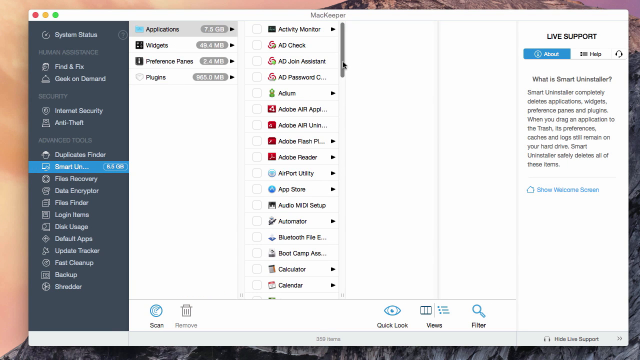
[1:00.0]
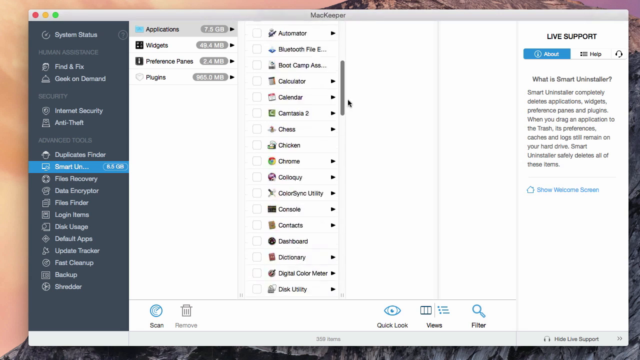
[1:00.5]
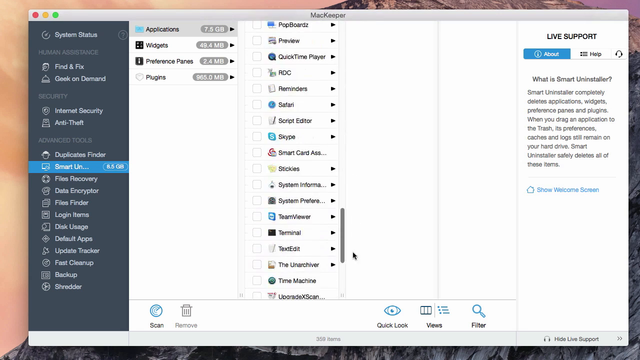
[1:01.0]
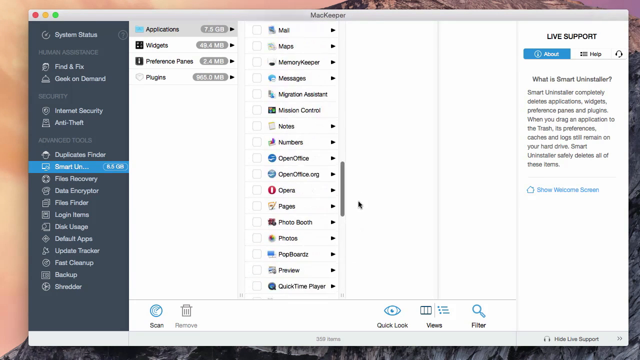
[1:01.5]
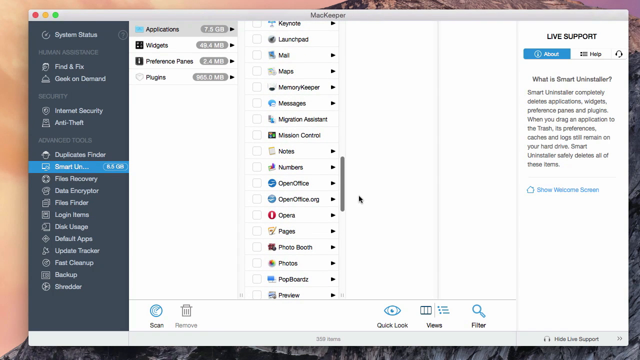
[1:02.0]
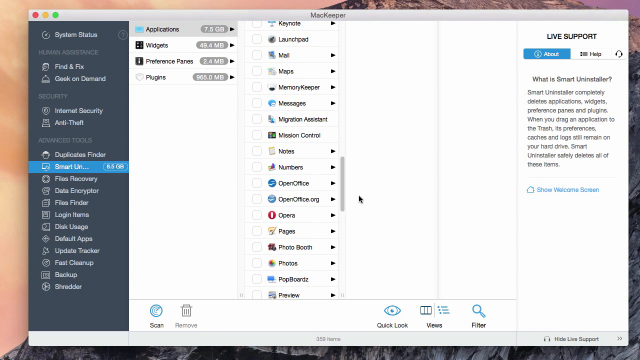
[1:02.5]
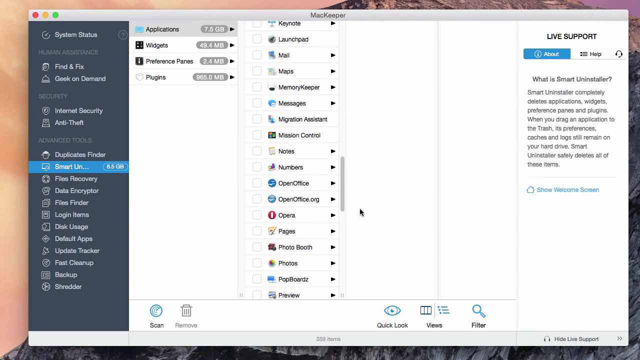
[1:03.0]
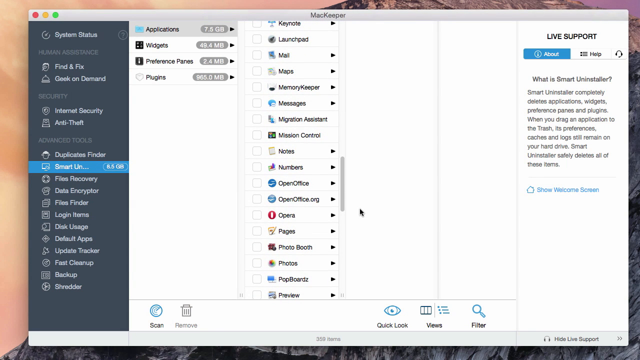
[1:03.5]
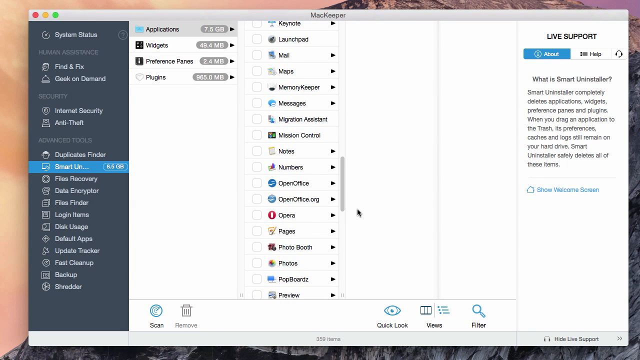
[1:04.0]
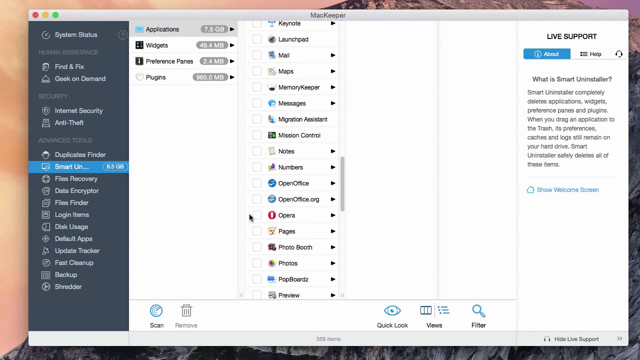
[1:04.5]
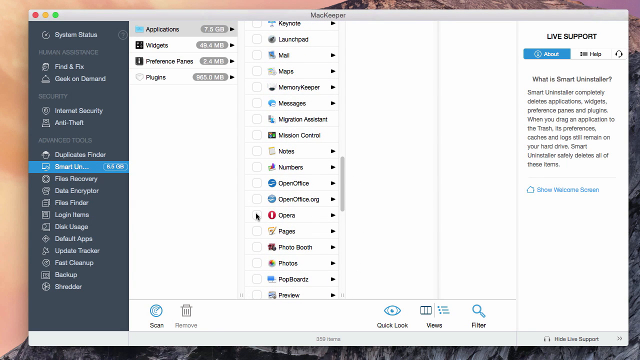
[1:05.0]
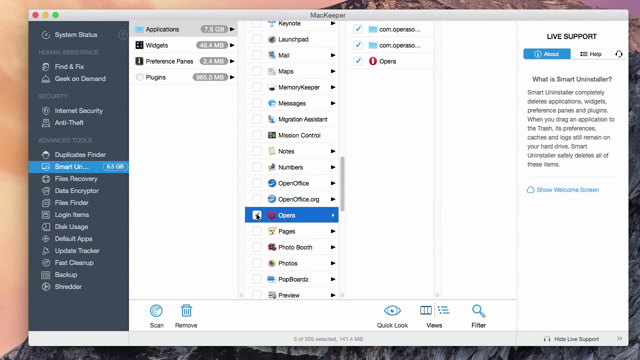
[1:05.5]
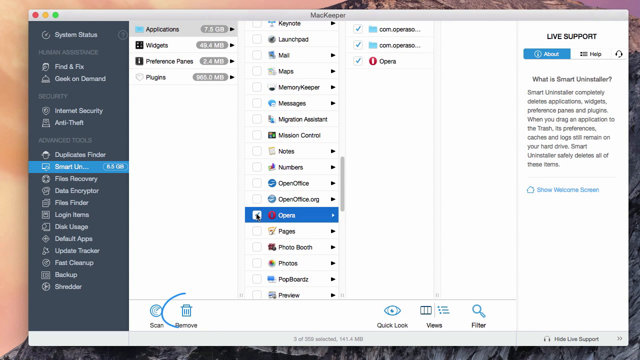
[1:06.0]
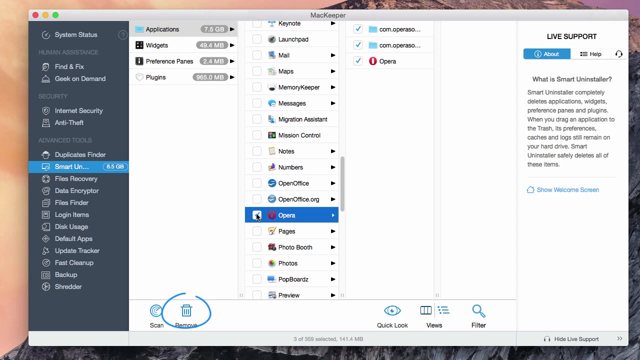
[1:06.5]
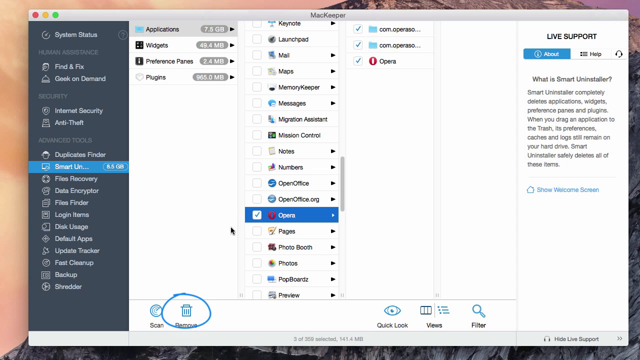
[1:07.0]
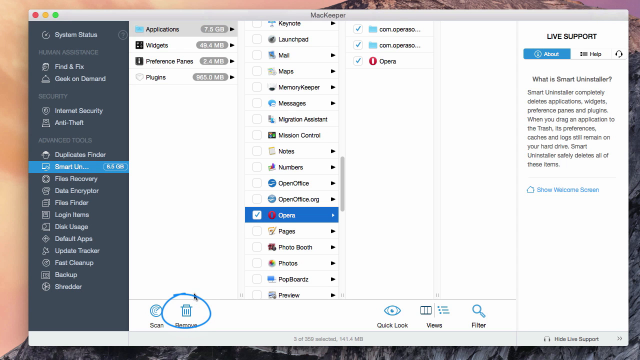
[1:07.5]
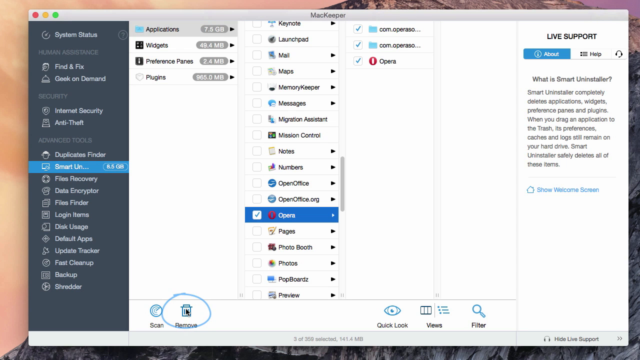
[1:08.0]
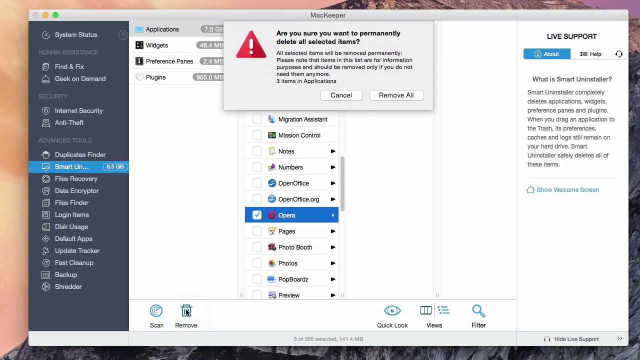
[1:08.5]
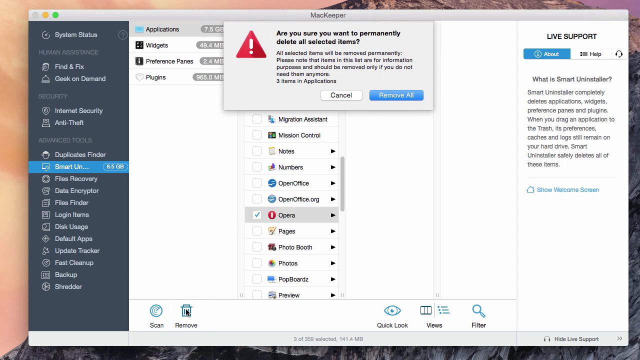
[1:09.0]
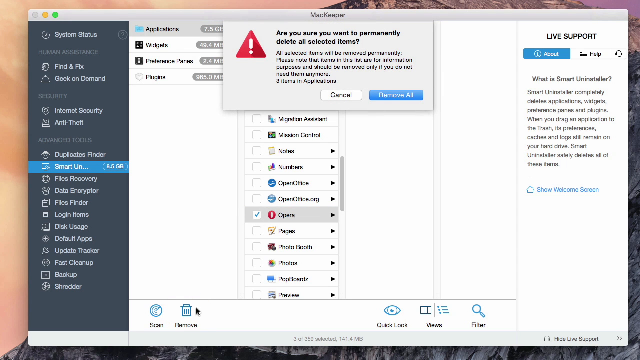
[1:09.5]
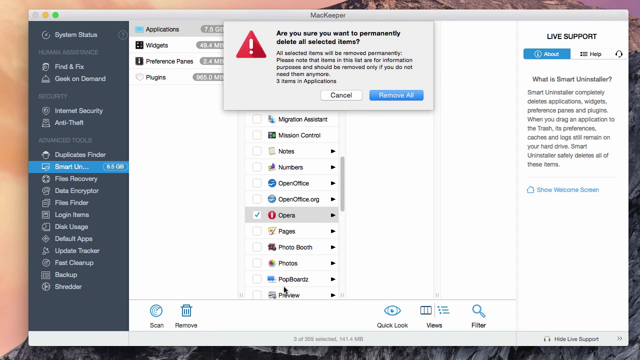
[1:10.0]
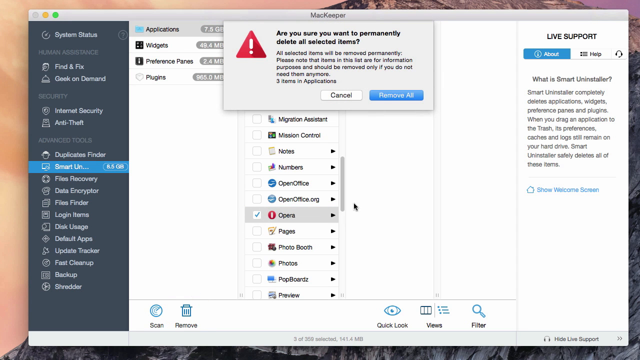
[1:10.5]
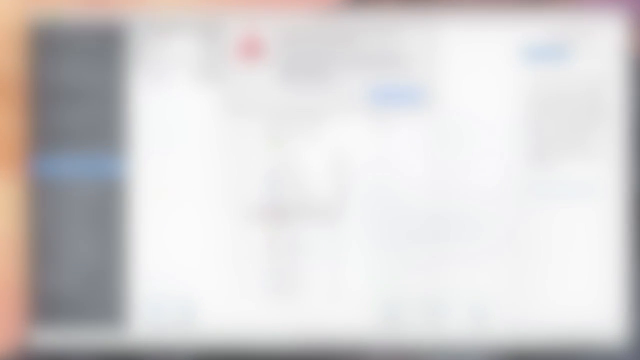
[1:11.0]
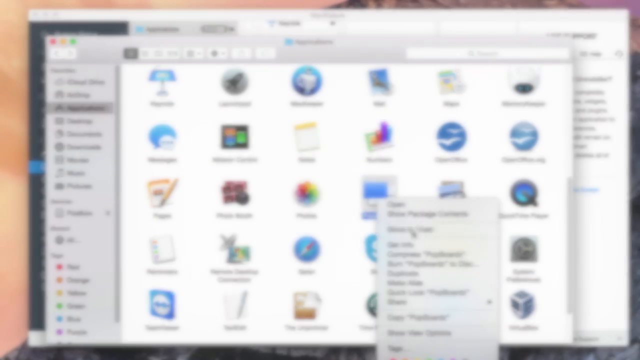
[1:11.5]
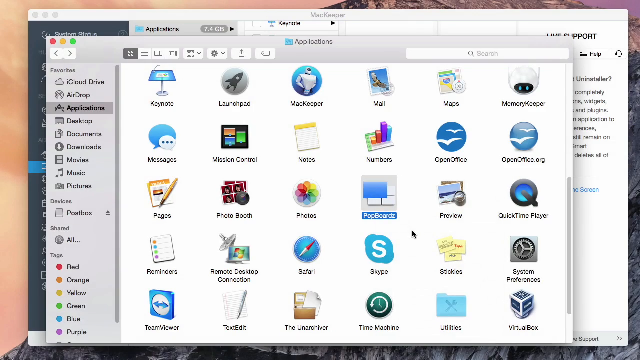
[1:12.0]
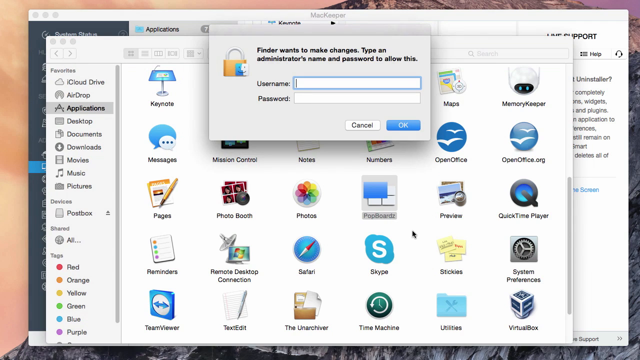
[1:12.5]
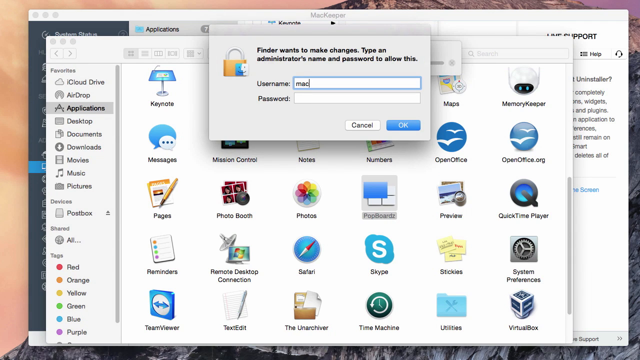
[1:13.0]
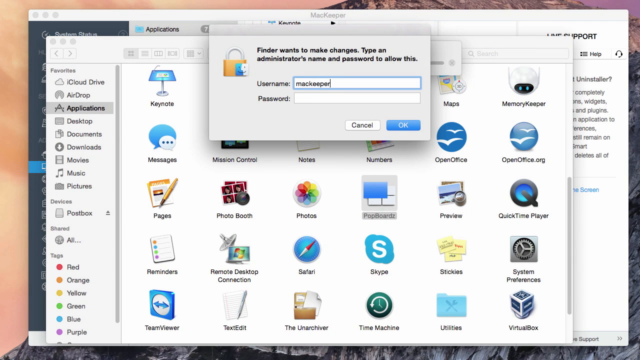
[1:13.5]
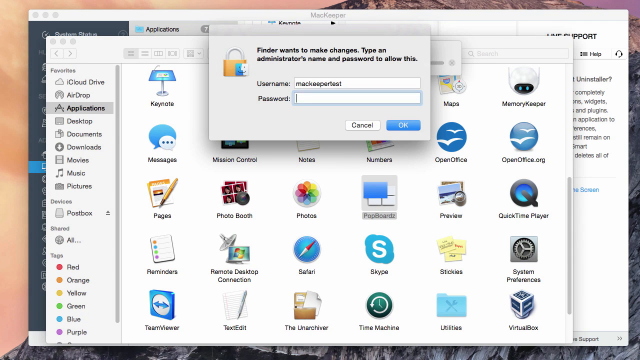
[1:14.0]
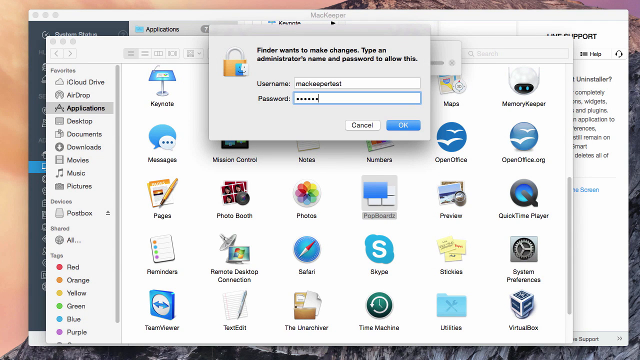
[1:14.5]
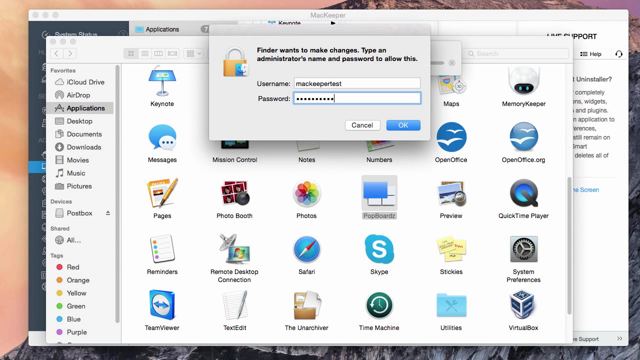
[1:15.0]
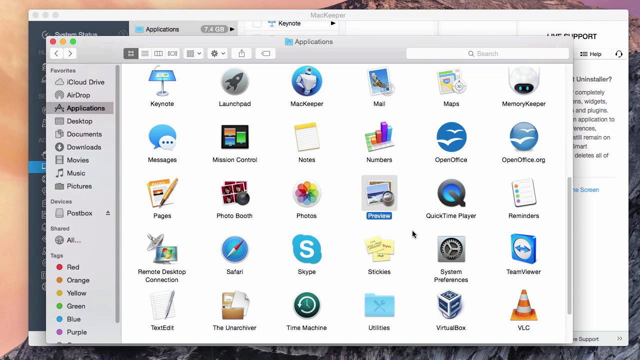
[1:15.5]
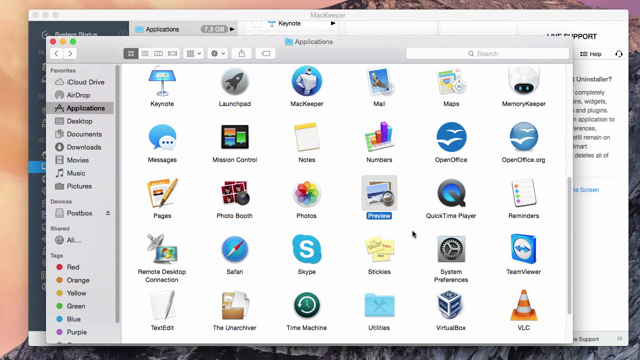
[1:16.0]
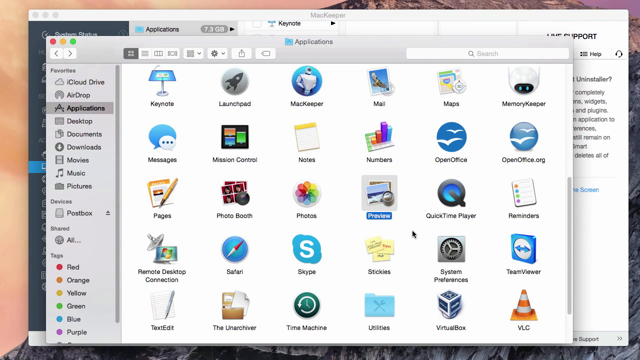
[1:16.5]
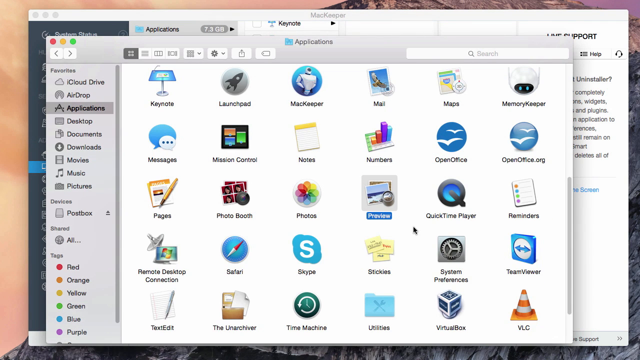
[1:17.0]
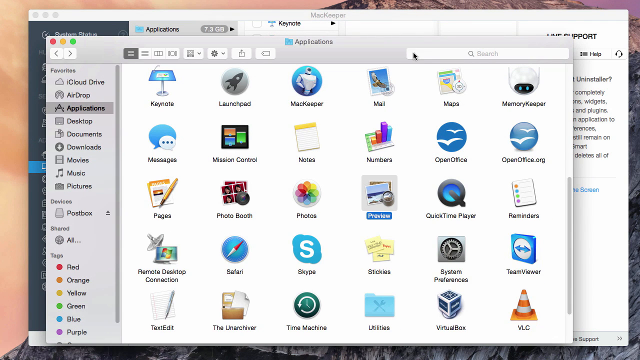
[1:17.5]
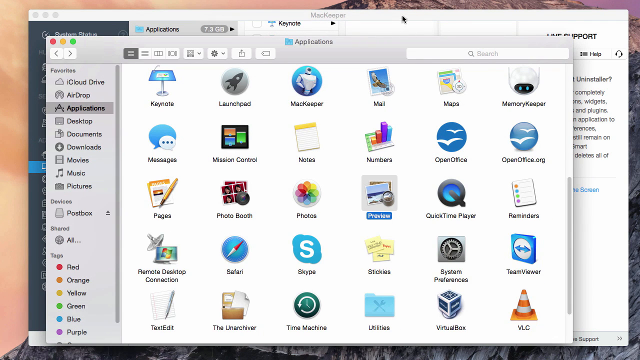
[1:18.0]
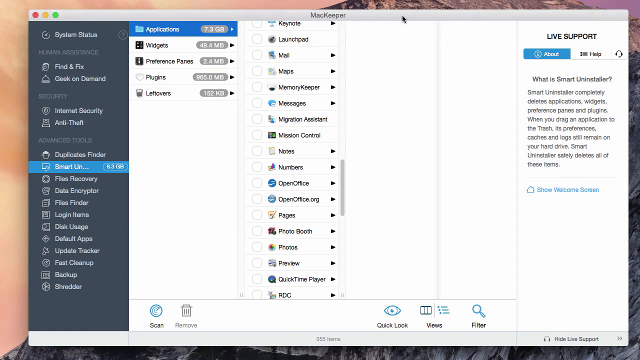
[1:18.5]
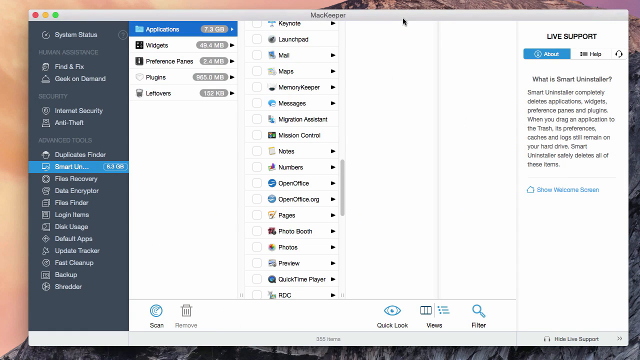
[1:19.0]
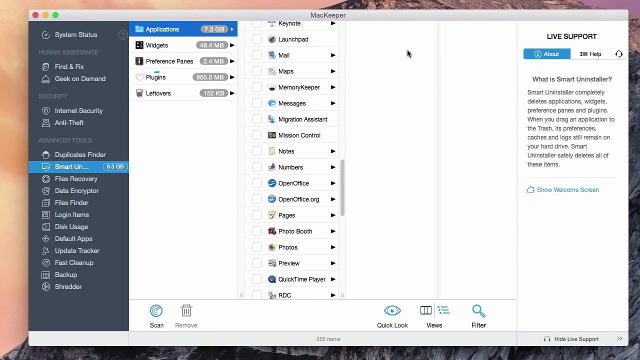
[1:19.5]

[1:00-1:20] With the mouse at the top of the screen by the scroll bar, the user pulls the scroll bar down through all the applications, all the way to the bottom, then scrolls back up about halfway and finds the Opera application. The user clicks the empty white box beside Opera, adding a blue checkmark and opening more items to its right. A blue circle is drawn around the Remove button at the bottom, which has a small trash can symbol, and the user moves the mouse down and clicks Remove. A prompt asks "are you sure you want to permanently delete all selected items?" and the mouse moves up toward the Remove All button as the screen blurs and transitions to another screen showing applications. An application can faintly be seen being moved to the trash, and a prompt appears saying that "the finder wants to make changes," with an area to enter a username and password. The user types in a username and password and clicks the OK button below. A prompt shows two items being removed to the trash. The view stays in the same position as the mouse moves upward. The user clicks on the MacKeeper software, and a circle starts to form over the Plugins and Leftovers area of MacKeeper.